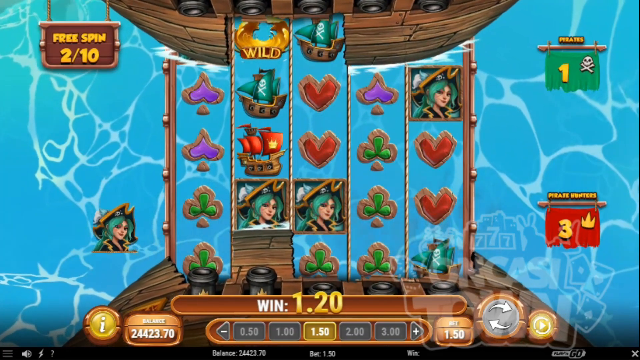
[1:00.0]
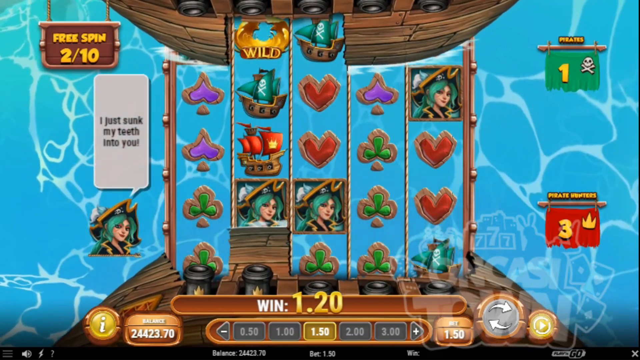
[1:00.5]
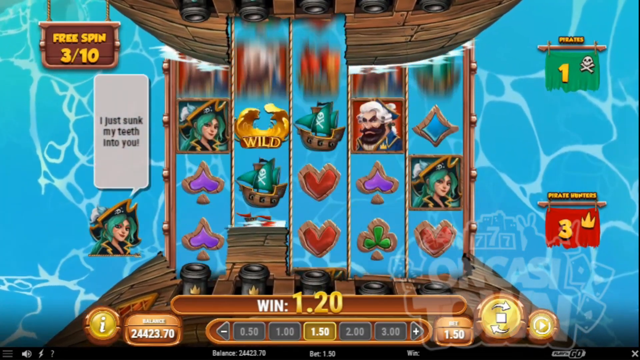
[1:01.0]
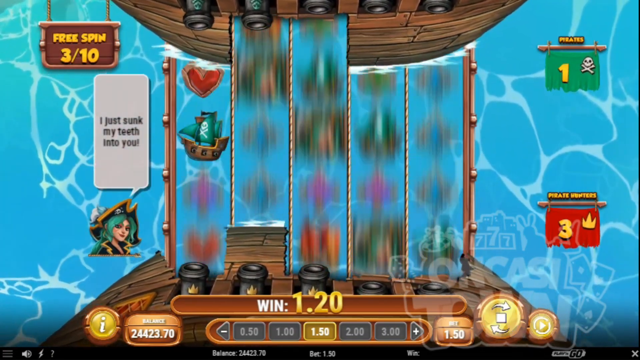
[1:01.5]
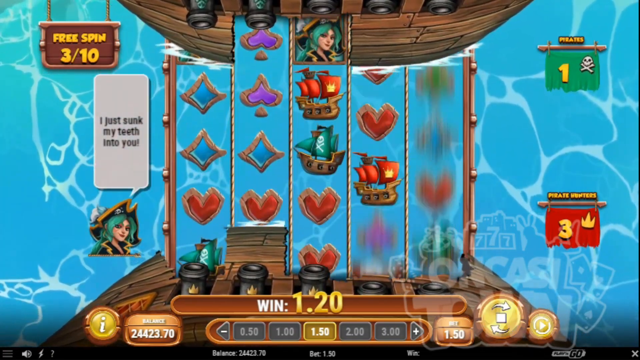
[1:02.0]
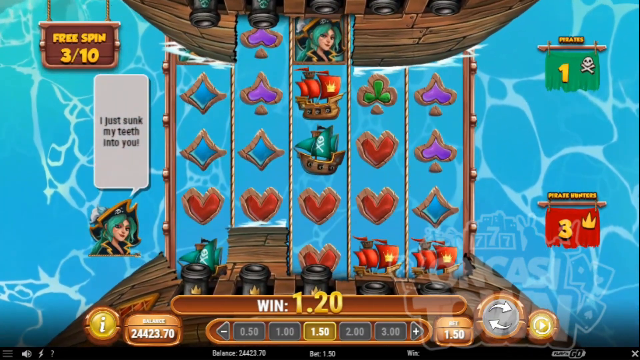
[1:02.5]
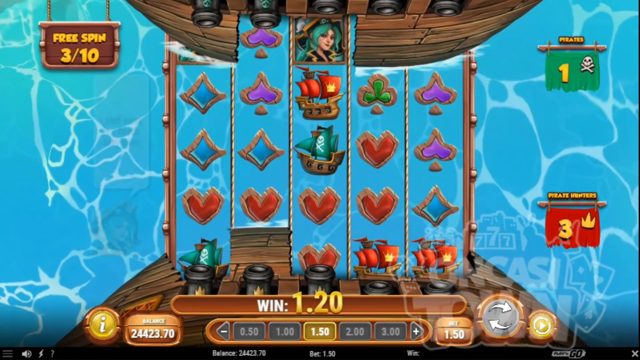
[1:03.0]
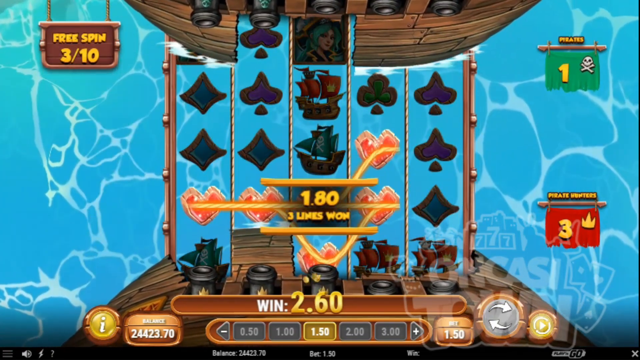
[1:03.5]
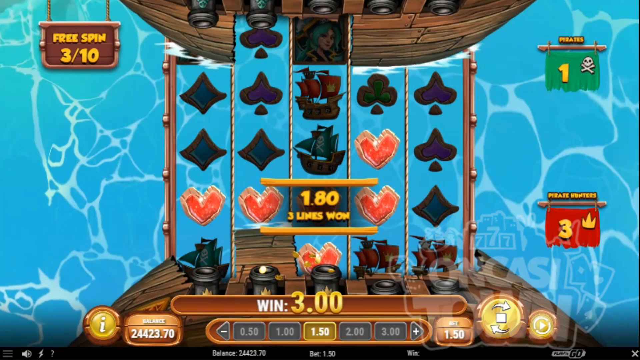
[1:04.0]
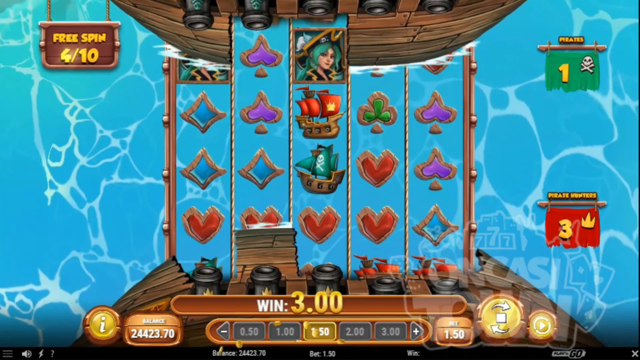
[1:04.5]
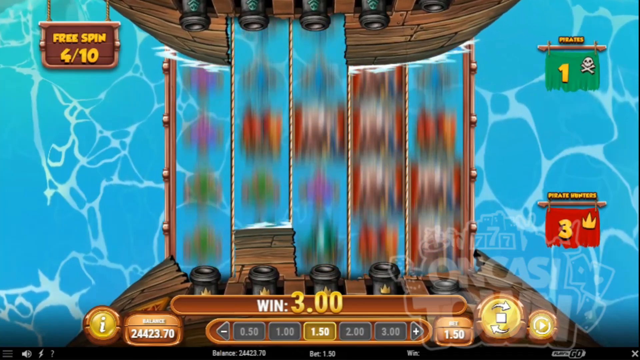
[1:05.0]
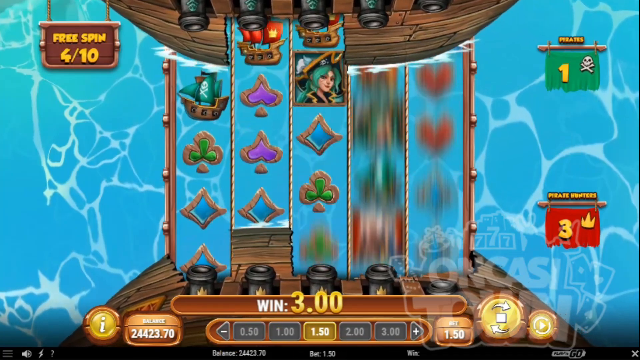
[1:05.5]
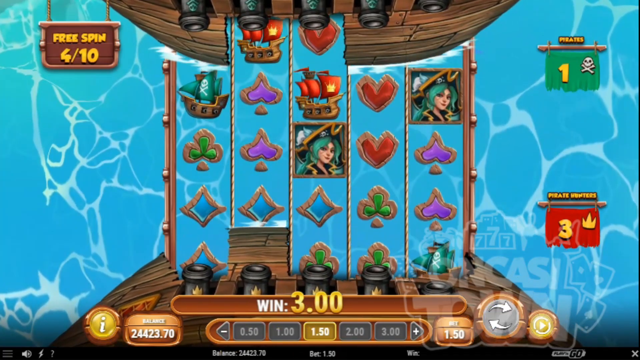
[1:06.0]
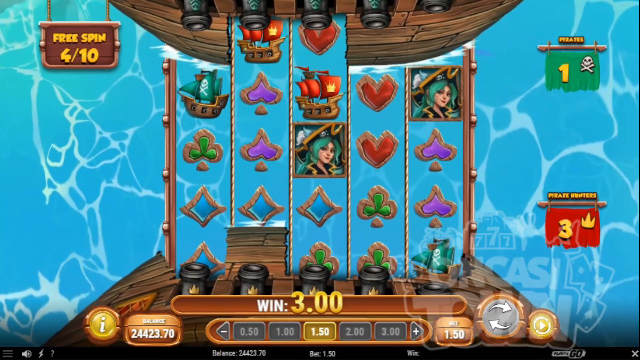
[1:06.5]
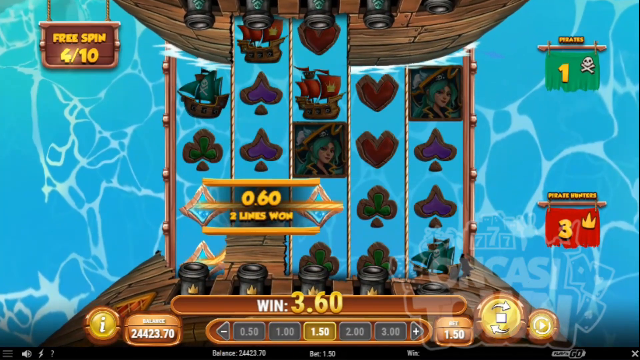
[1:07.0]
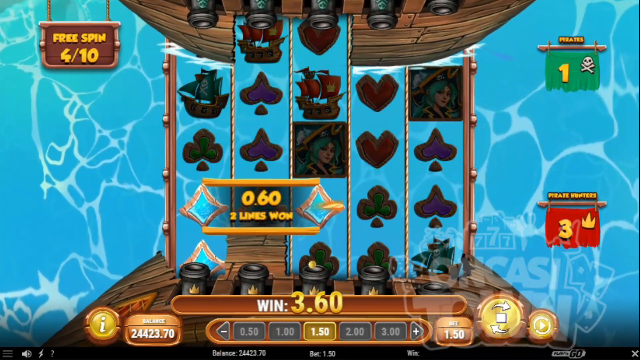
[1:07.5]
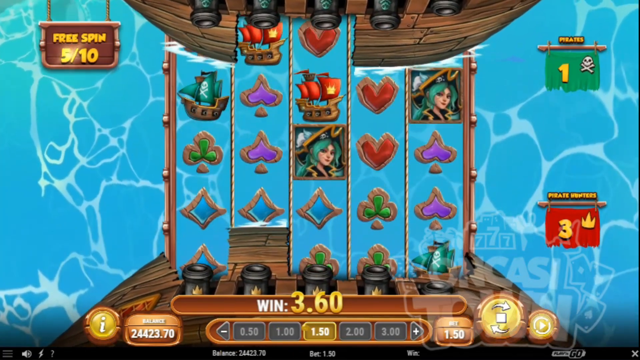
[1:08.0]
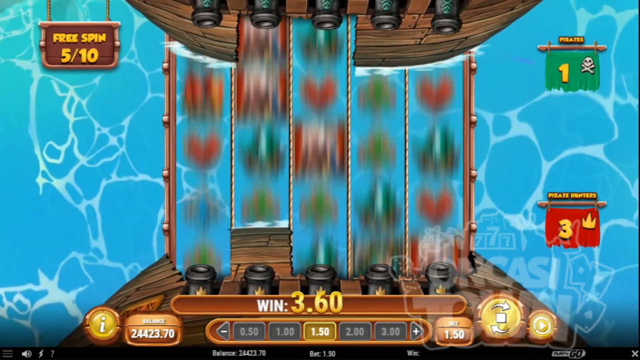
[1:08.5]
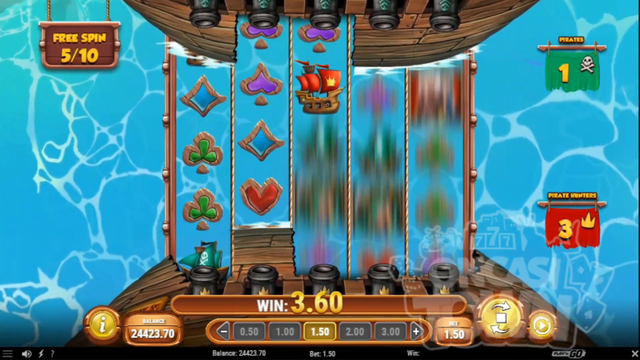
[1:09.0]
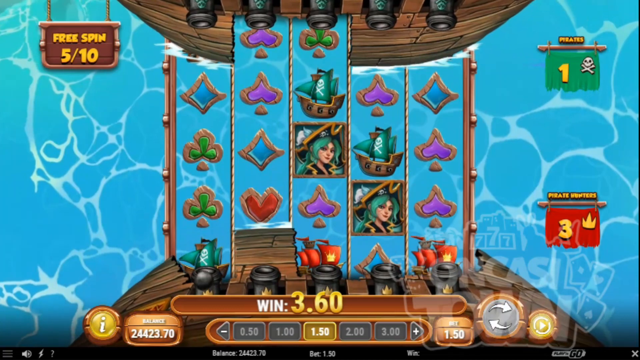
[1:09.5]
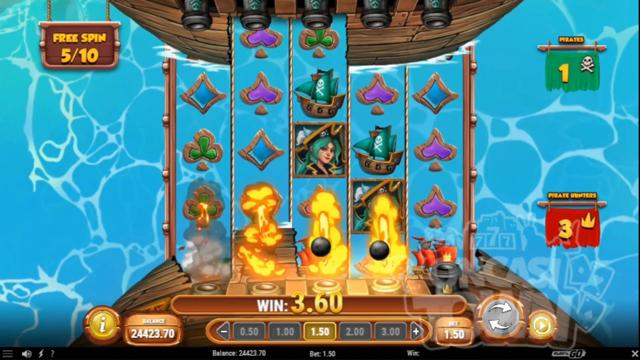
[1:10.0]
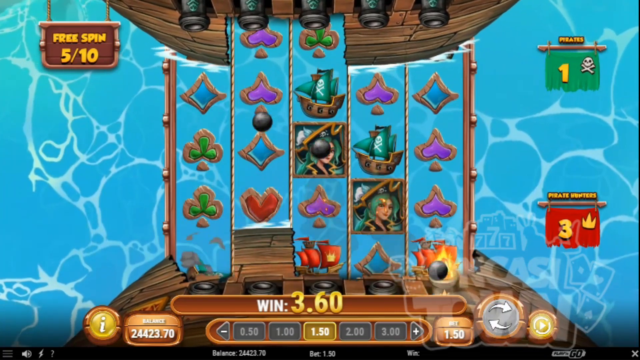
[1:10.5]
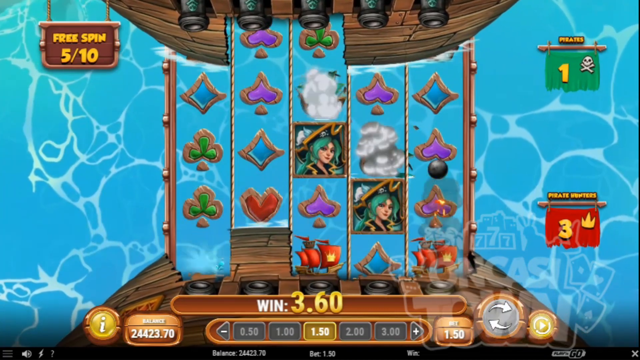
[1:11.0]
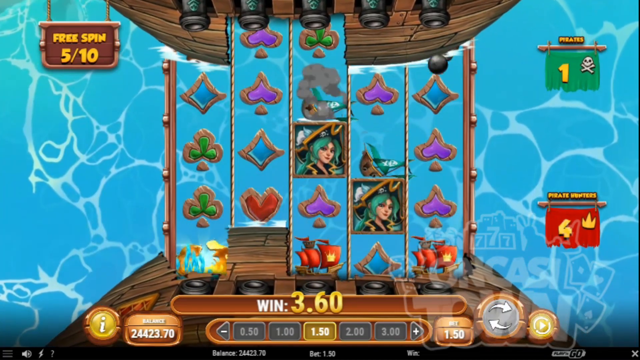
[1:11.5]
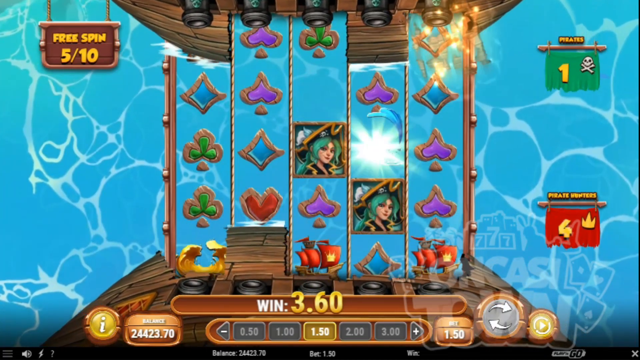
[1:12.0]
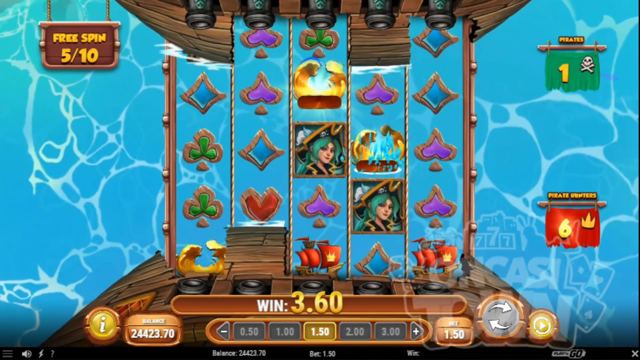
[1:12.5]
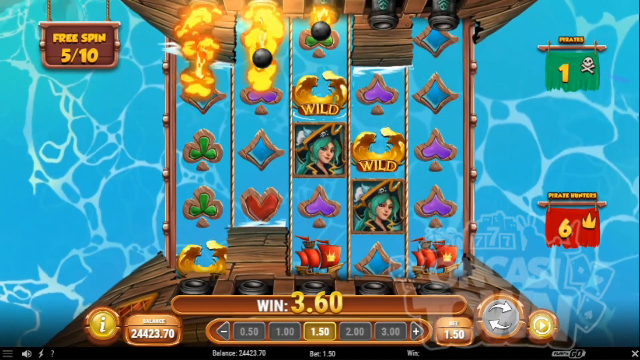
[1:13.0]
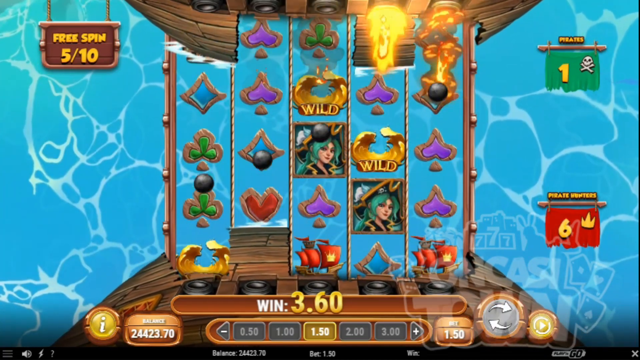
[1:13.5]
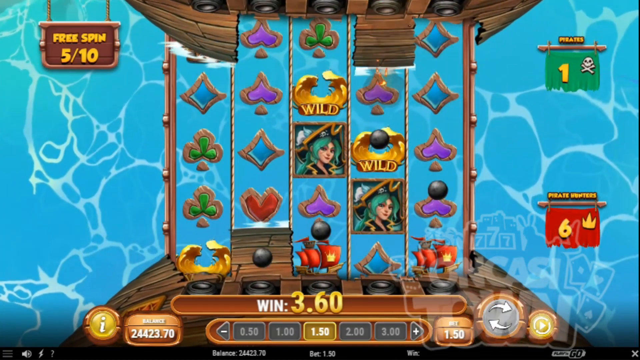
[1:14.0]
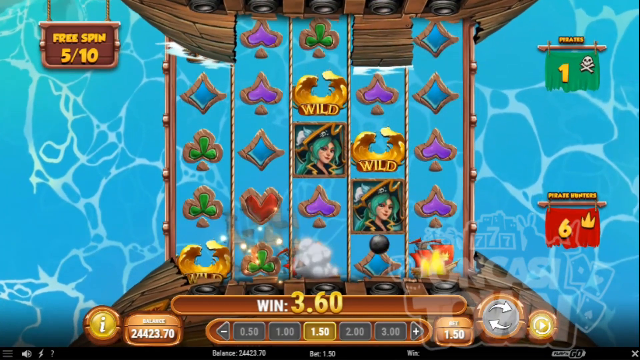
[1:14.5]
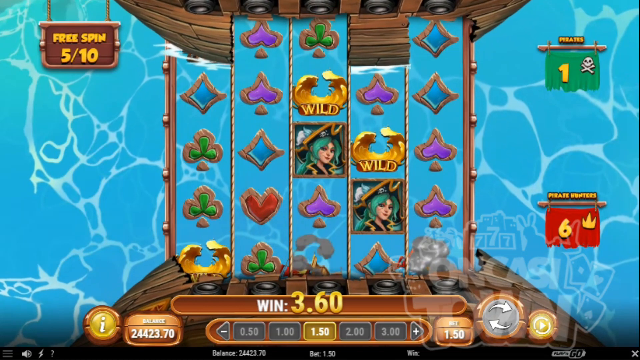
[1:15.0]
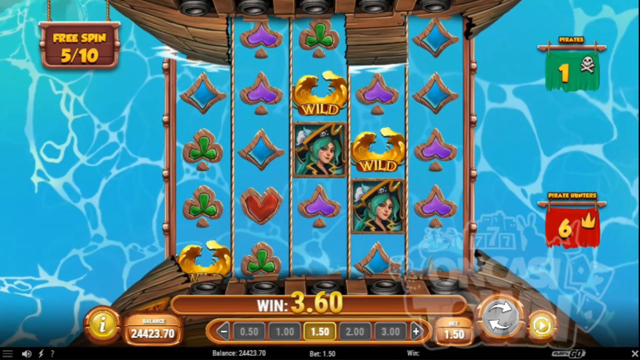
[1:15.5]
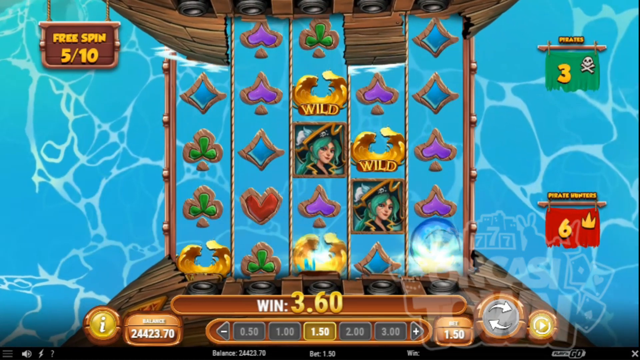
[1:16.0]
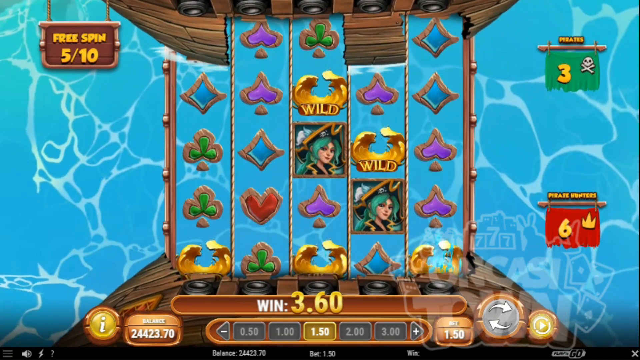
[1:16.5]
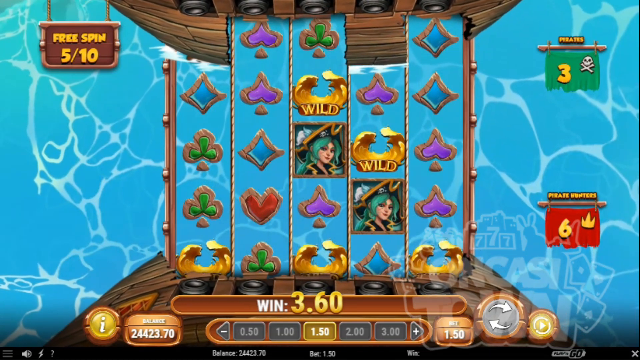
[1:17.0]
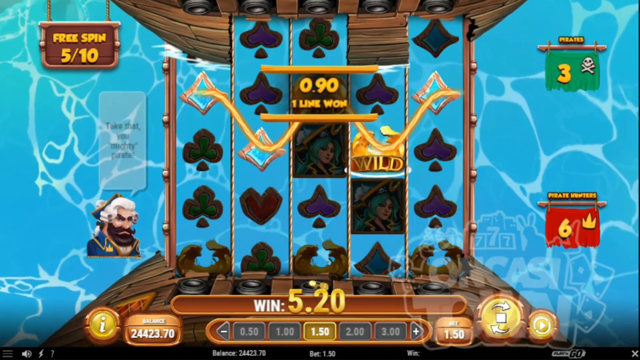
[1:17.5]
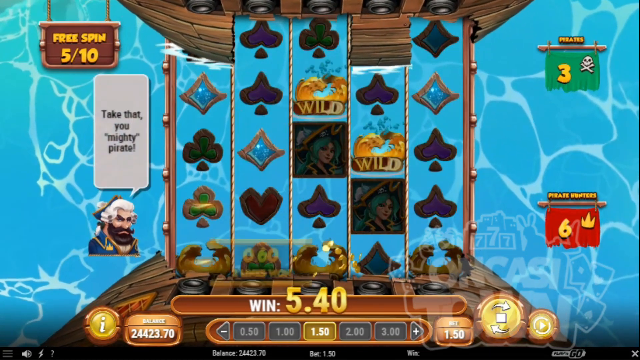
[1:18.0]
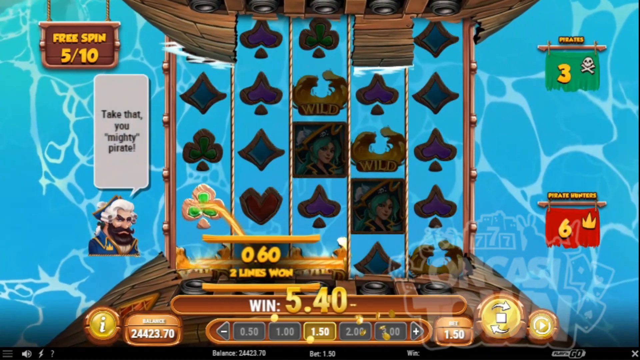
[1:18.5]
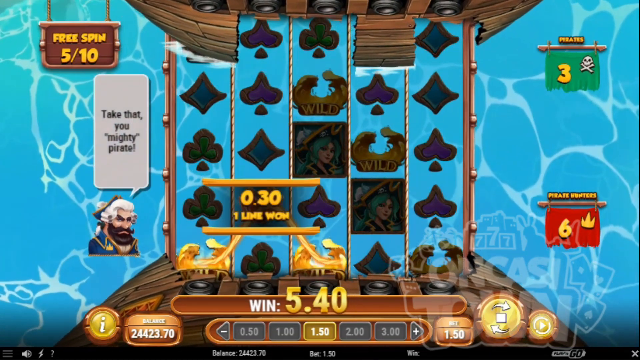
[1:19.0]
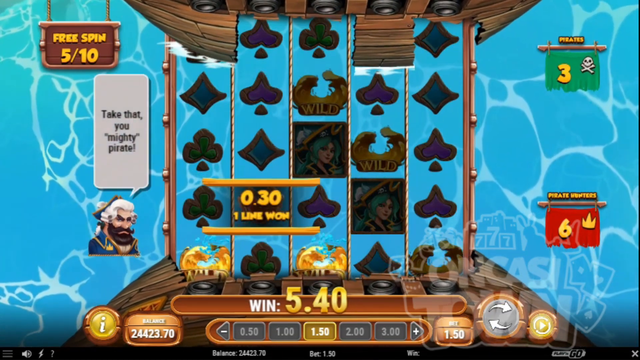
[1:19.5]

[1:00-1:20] Play continues. A little character like a pirate in the bottom left-hand corner says "I just sunk my teeth into you". Various scores come up and different icons line up. A bunch of cannonballs are fired from the ship at the bottom of the screen towards the ship at the top, and the scores change accordingly. The green panel in the top right-hand corner still says "1", and the red panel in the bottom right-hand corner now says "6"; then the top green one clicks over to "3". Various other scores come up as the game continues. Just before the end, a graphic appears with a grumpy old pirate on it saying "take that you mighty pirate".